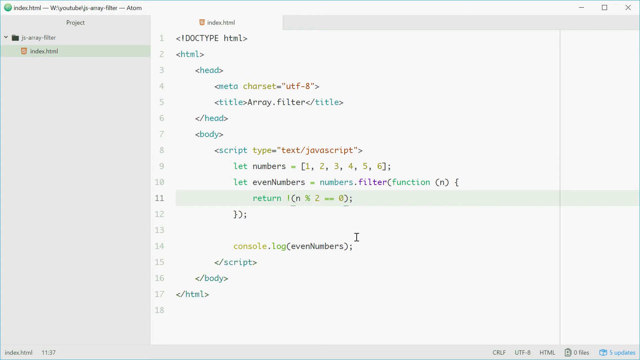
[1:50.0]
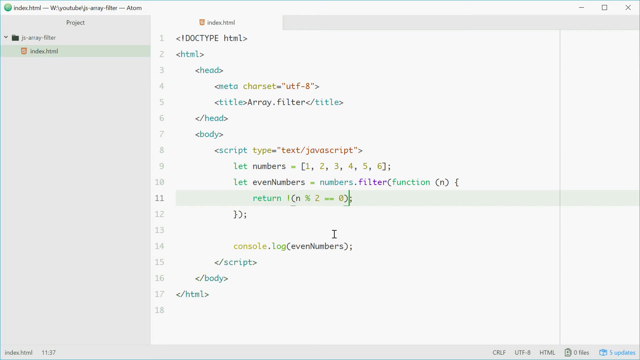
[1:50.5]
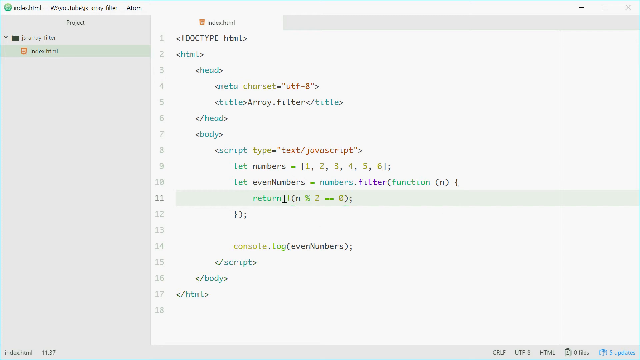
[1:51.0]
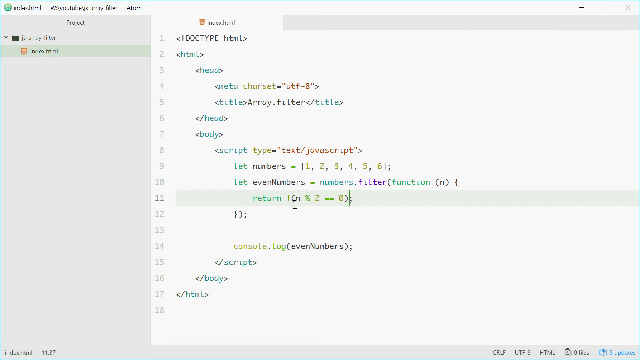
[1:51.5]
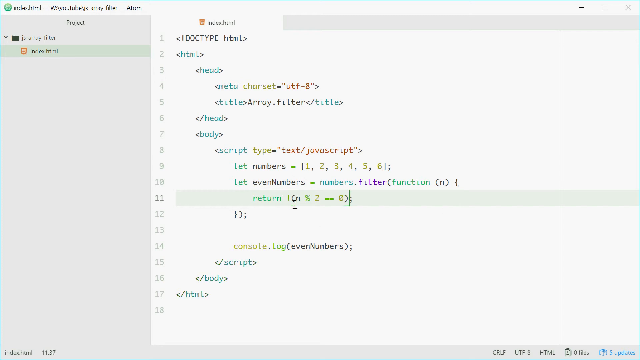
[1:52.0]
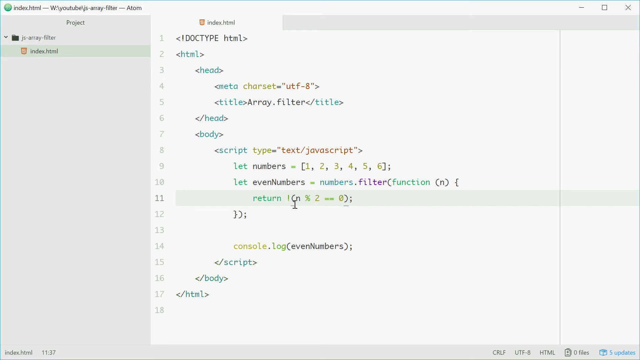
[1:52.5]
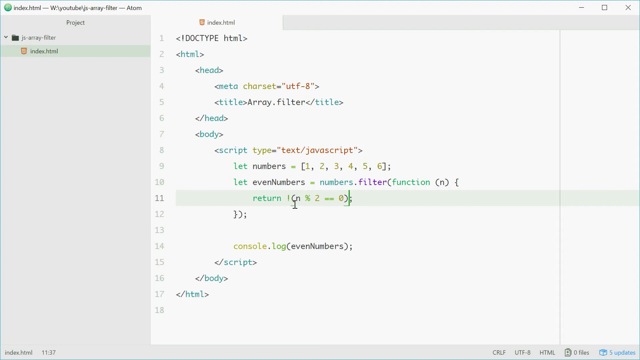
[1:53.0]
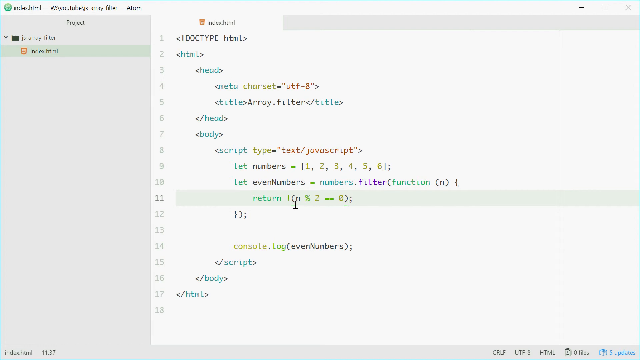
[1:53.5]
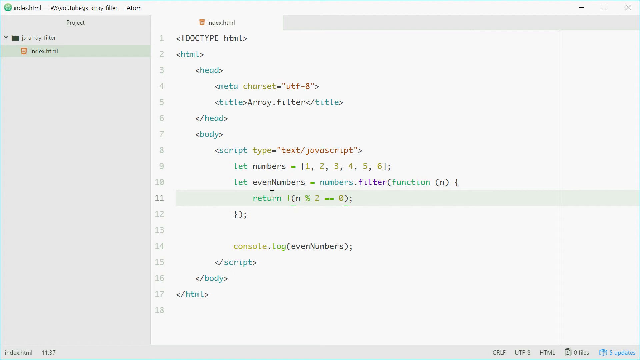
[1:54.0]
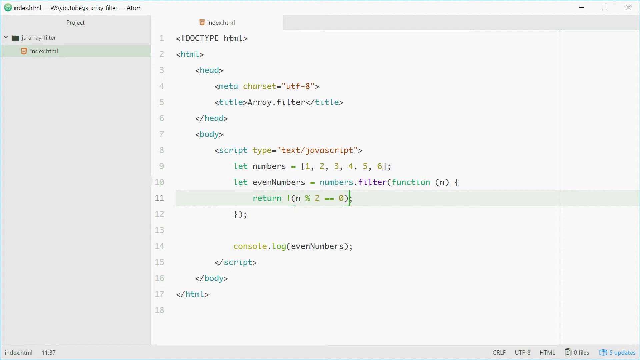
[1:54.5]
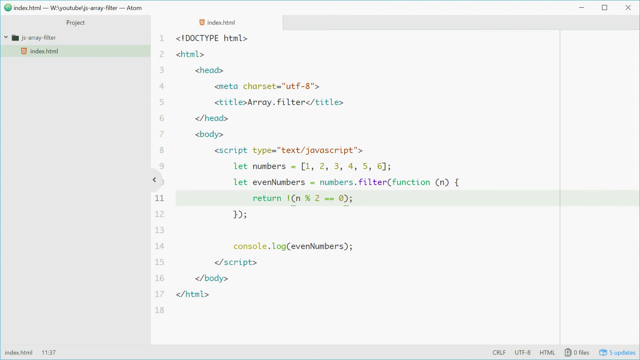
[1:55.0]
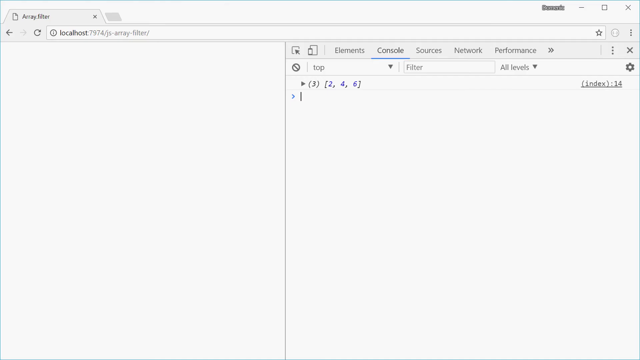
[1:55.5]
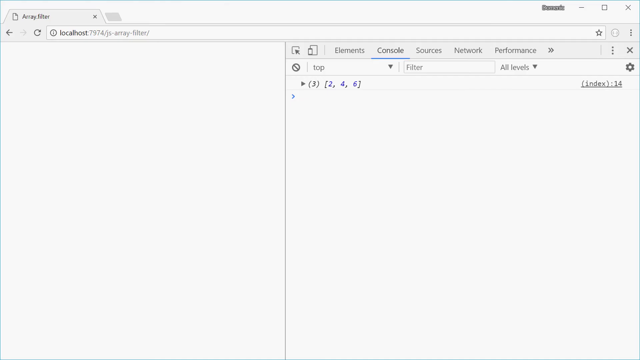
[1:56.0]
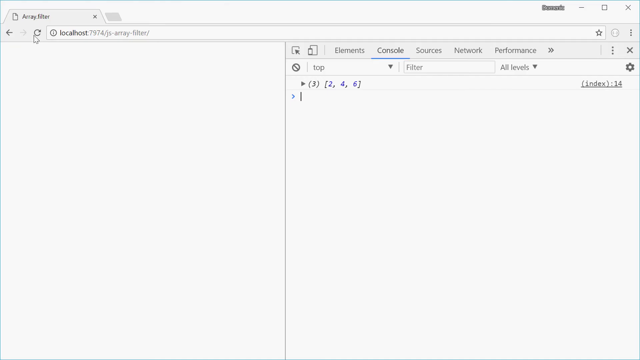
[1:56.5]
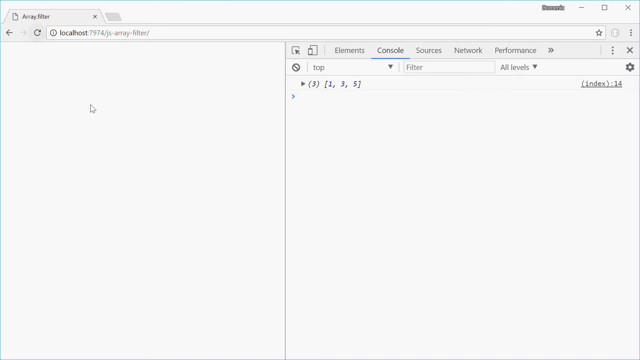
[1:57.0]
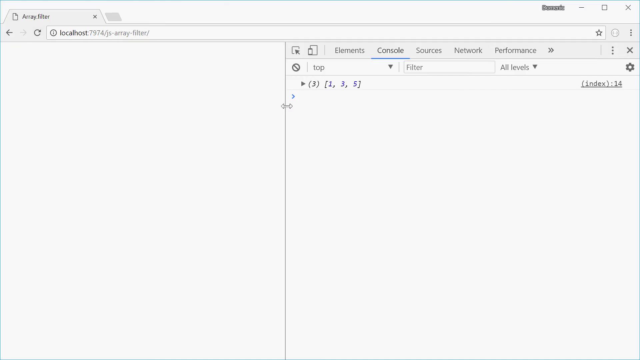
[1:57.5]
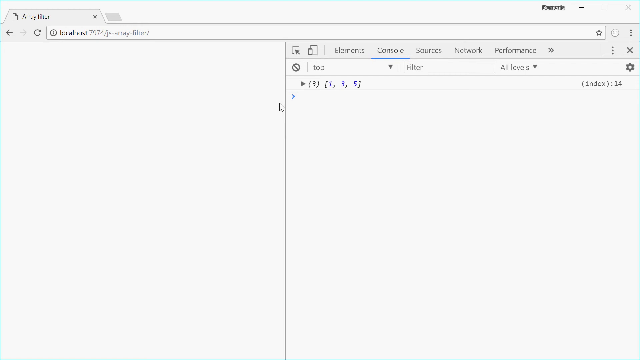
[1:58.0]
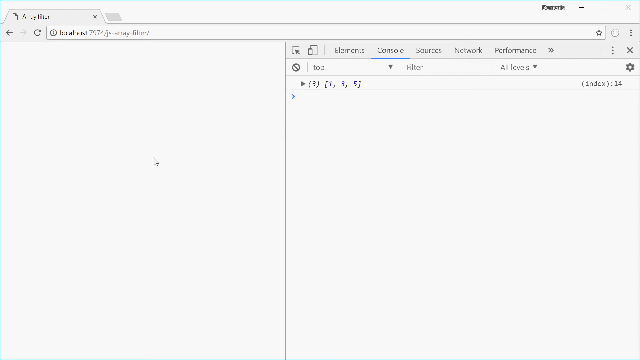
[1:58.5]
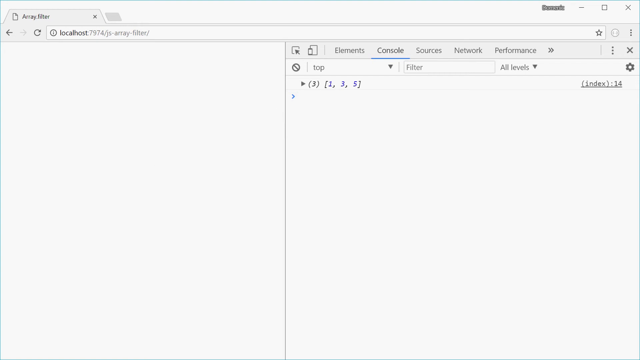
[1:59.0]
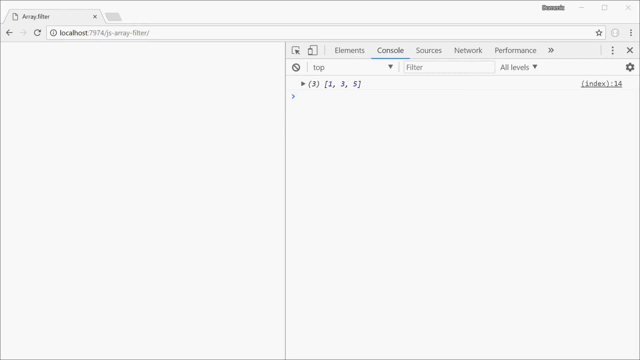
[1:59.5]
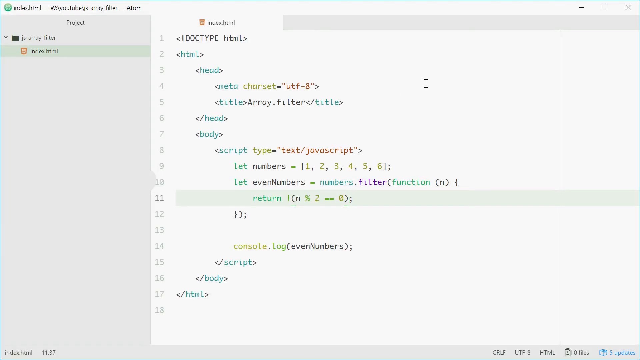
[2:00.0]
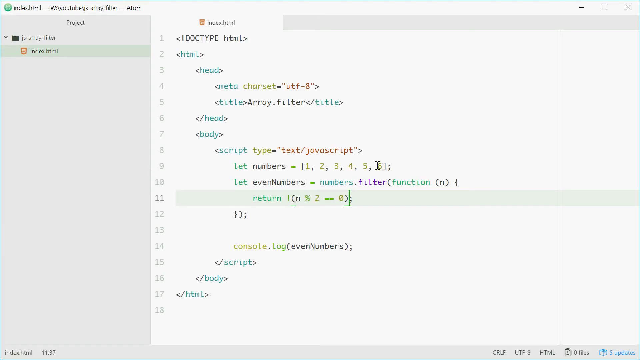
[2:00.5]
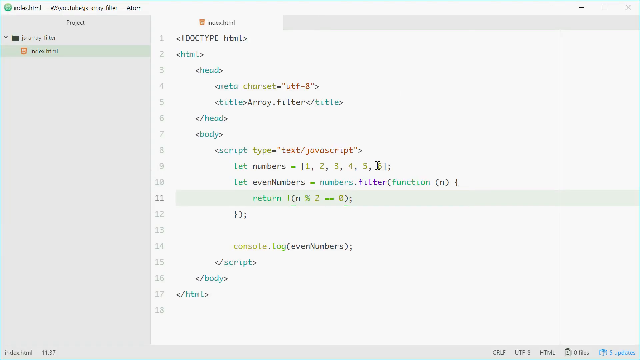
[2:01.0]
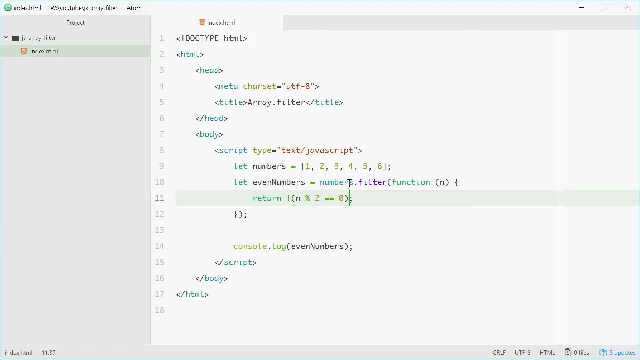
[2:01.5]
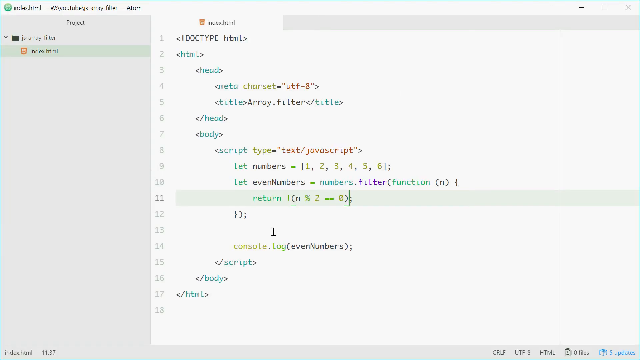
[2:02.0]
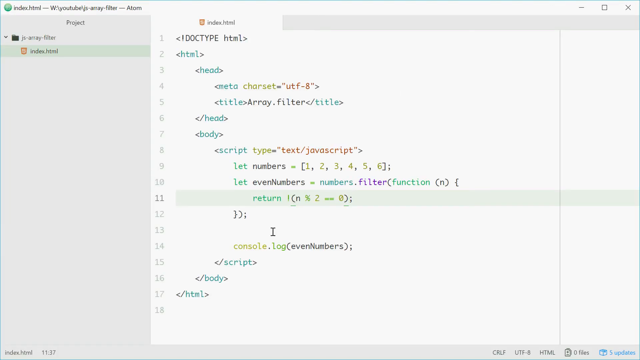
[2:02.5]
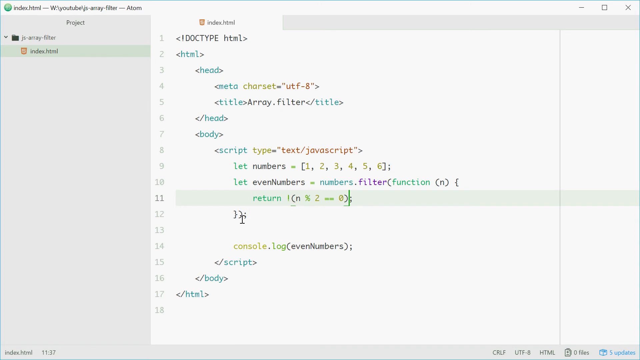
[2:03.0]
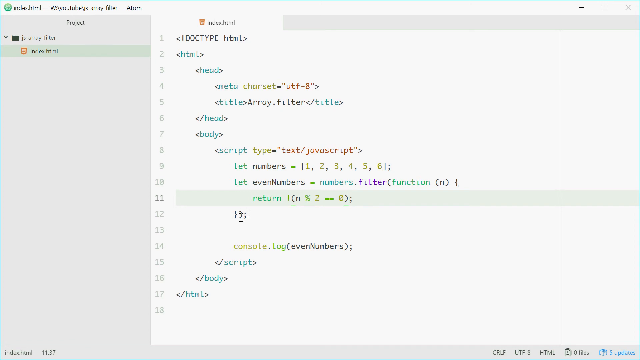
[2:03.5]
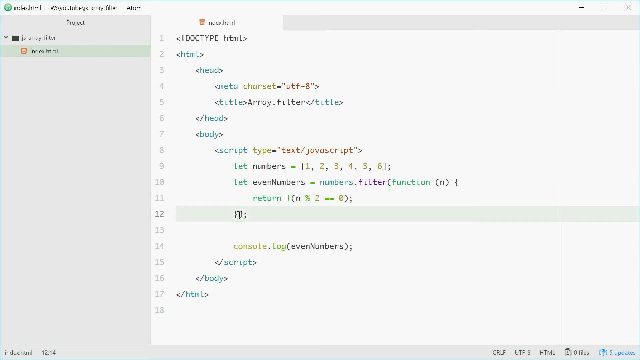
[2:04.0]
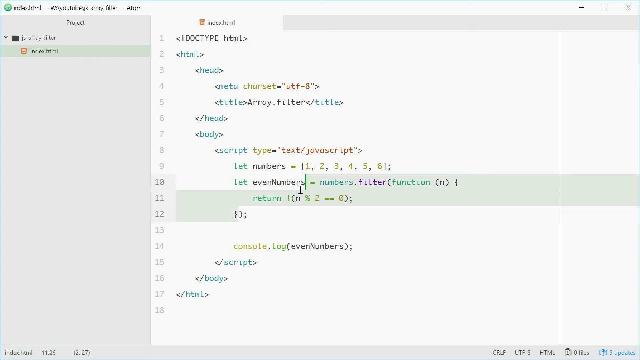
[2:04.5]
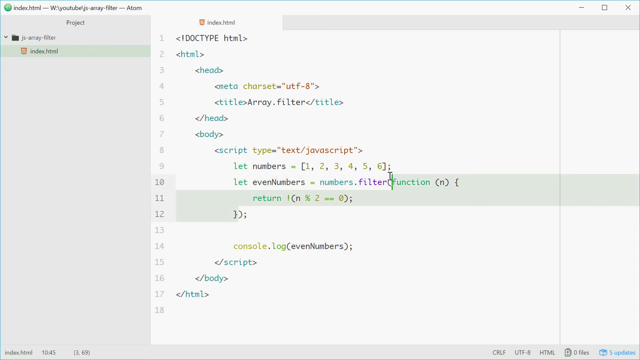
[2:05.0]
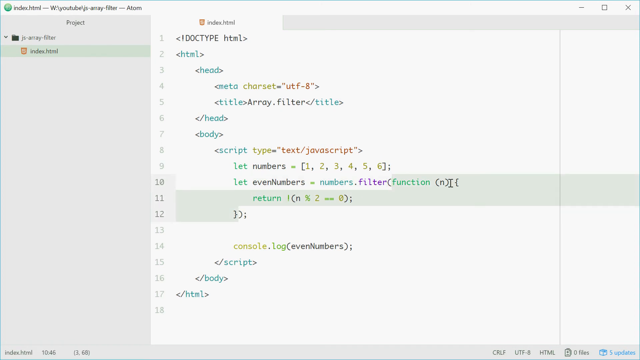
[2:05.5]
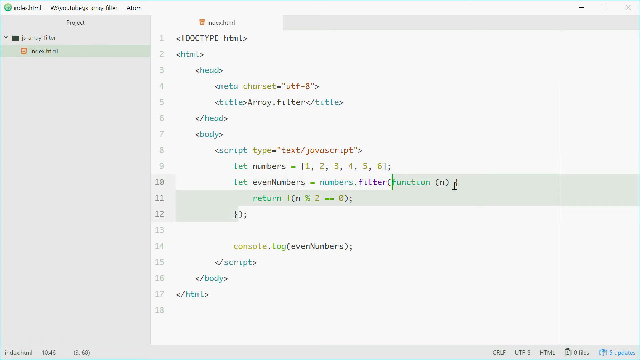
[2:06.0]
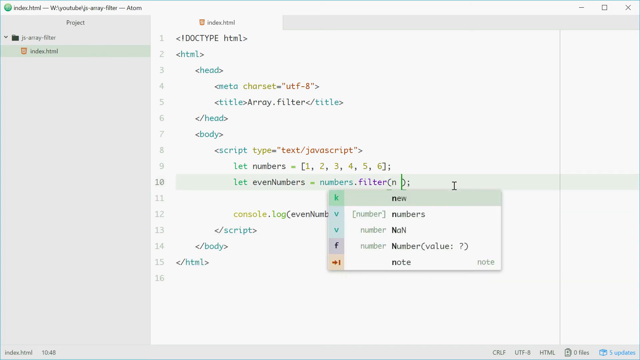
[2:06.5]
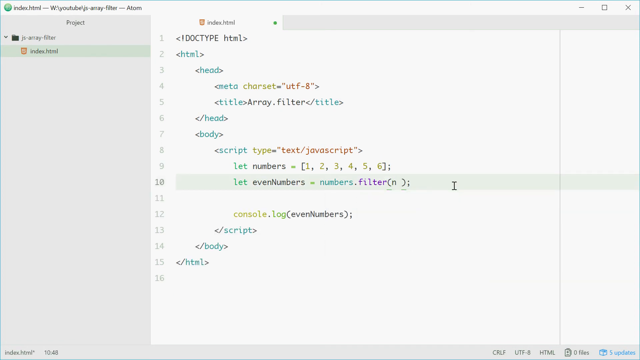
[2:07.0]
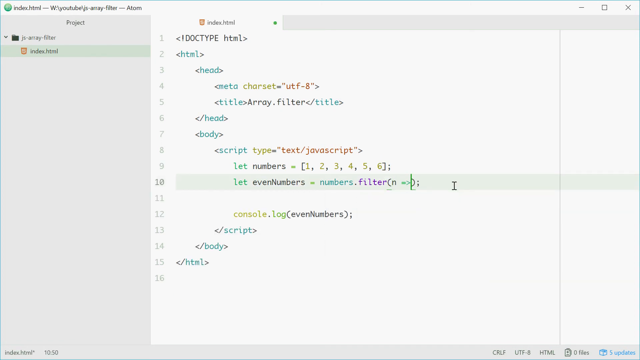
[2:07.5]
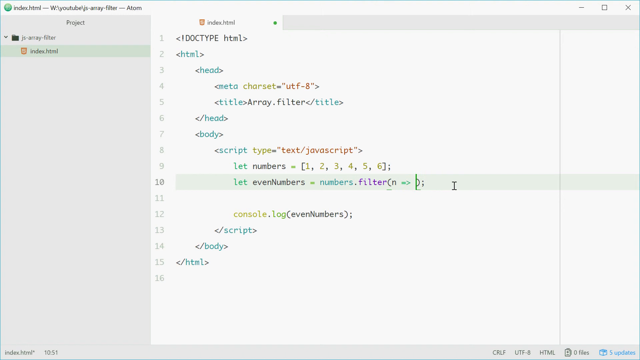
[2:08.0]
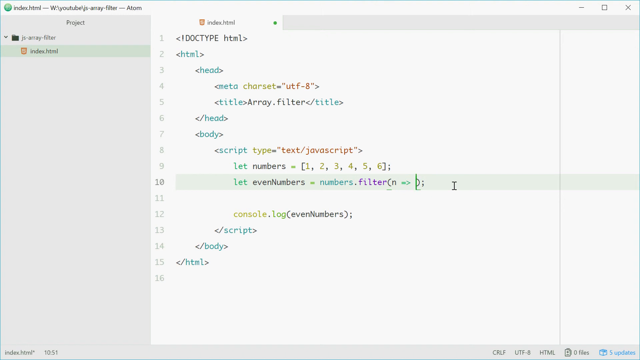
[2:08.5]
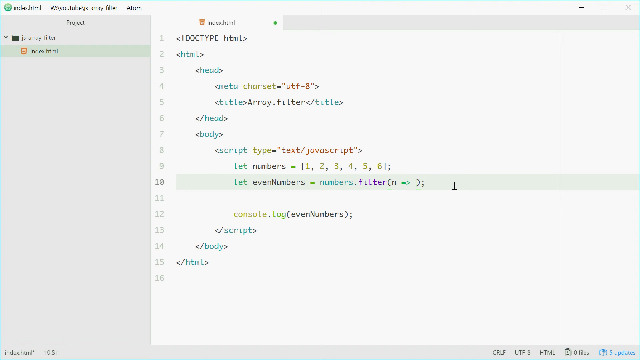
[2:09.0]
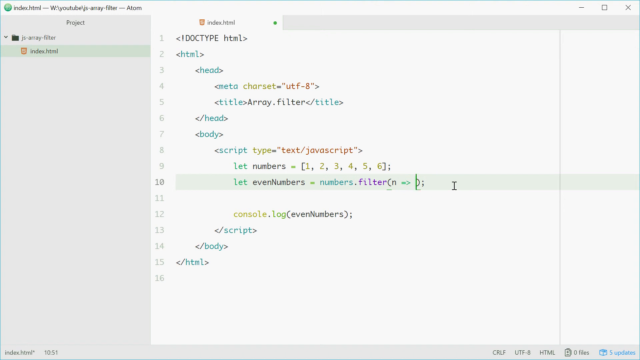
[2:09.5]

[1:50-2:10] The person edits line 11, then goes back to the other webpage labeled "Array Filter" and clicks the refresh button, leaving an all-white page. Back on the script page, the person highlights the text from "function" through the n on line 10, the entire line 11, and the closing curly bracket on line 12, and deletes all of it, leaving line 11 blank. On line 10, after "numbers.filter(", the person writes "=>".